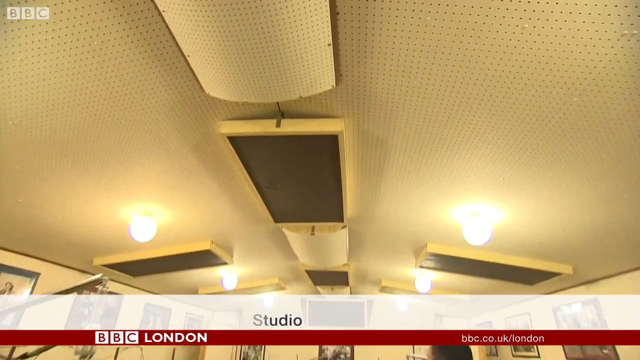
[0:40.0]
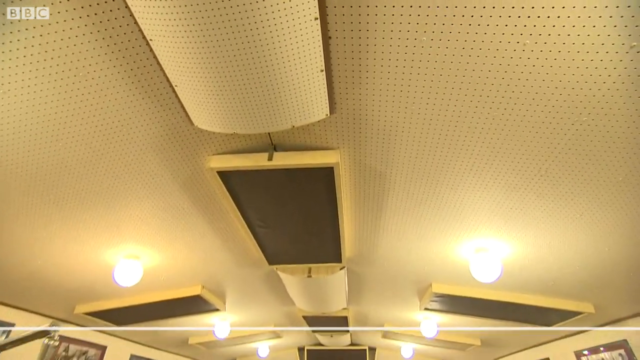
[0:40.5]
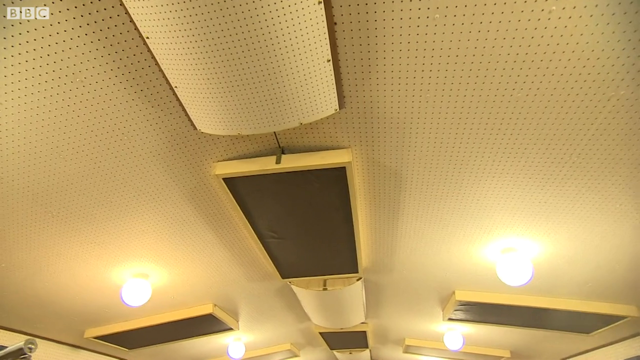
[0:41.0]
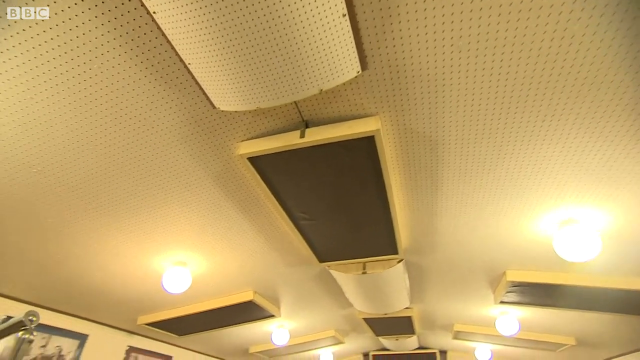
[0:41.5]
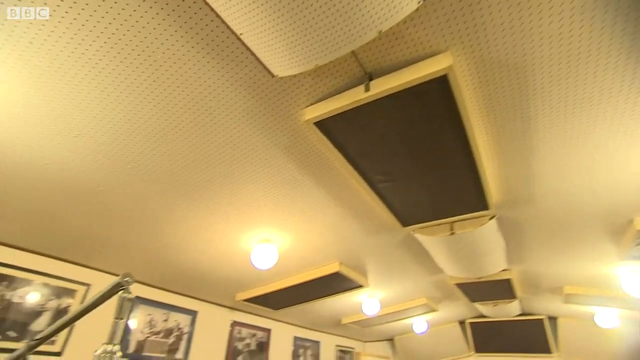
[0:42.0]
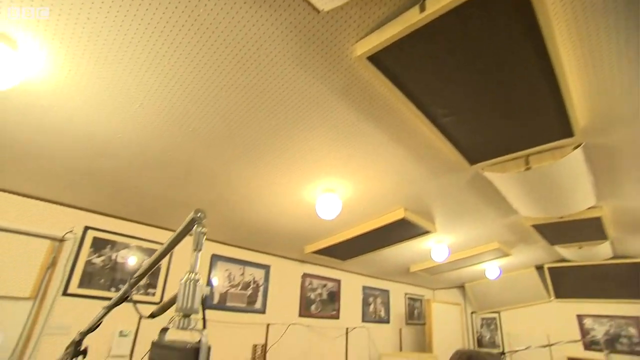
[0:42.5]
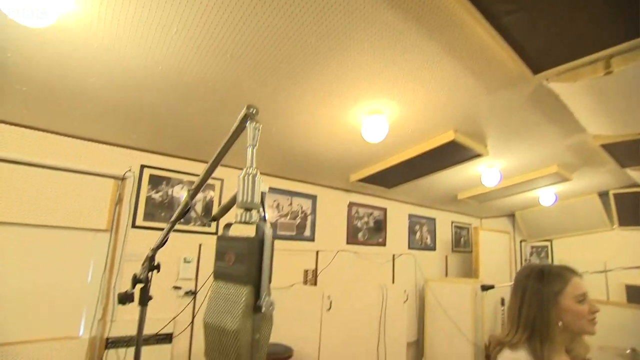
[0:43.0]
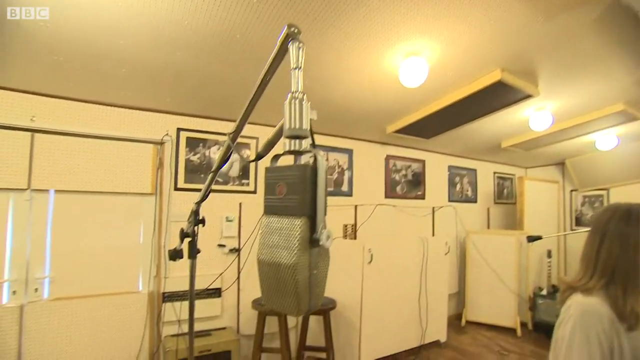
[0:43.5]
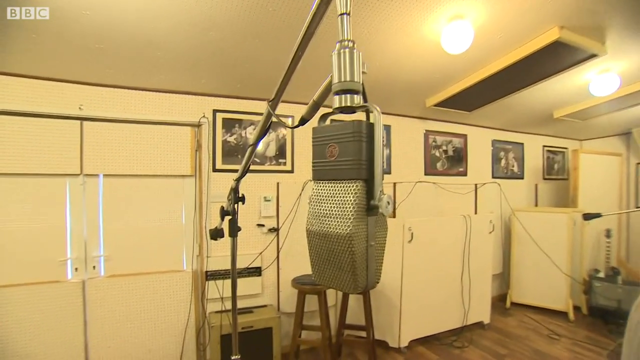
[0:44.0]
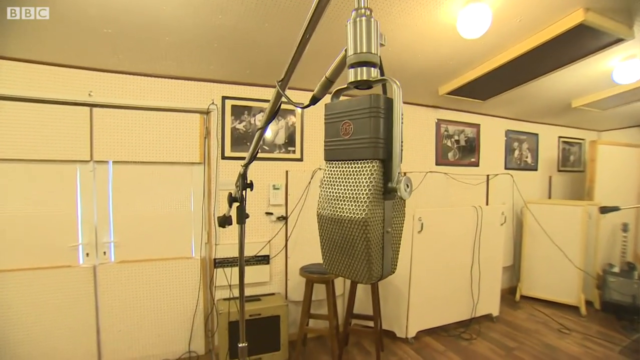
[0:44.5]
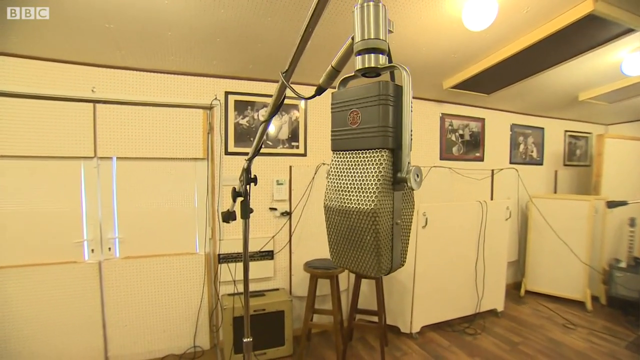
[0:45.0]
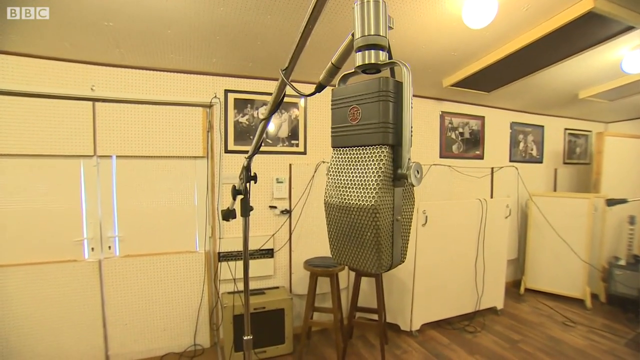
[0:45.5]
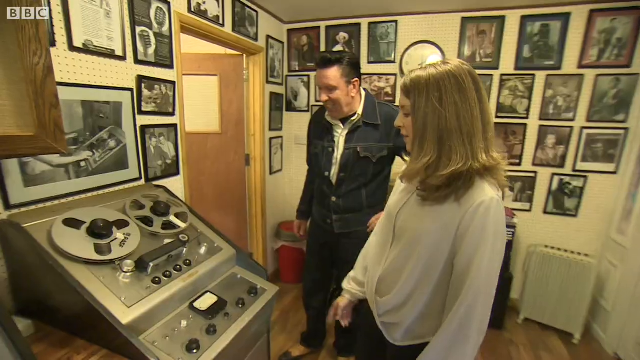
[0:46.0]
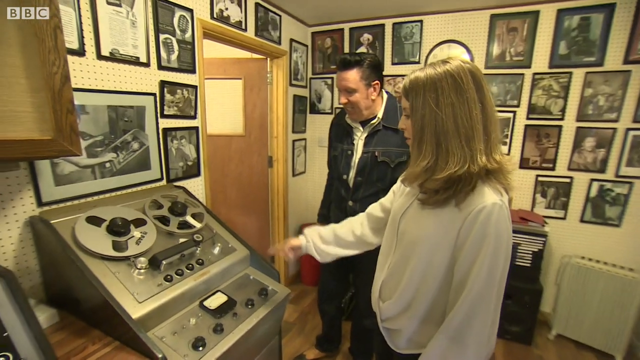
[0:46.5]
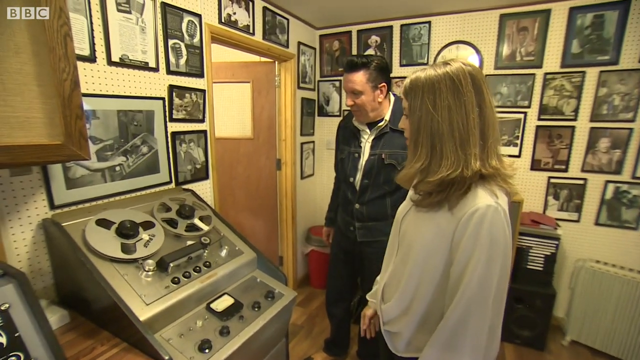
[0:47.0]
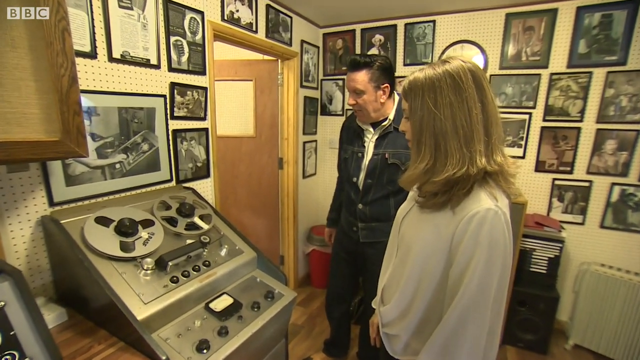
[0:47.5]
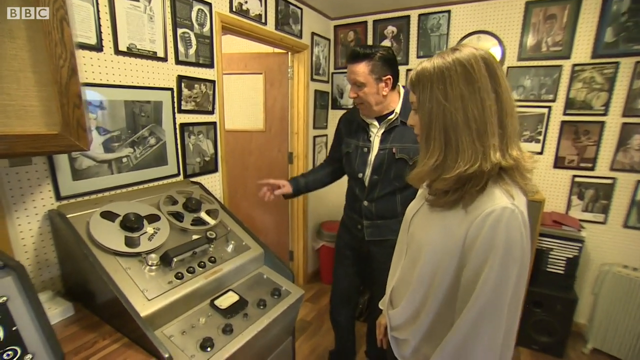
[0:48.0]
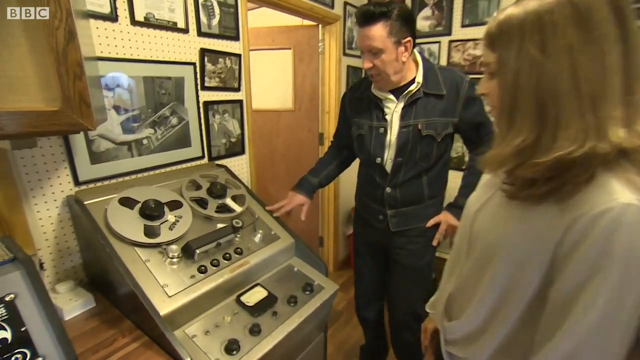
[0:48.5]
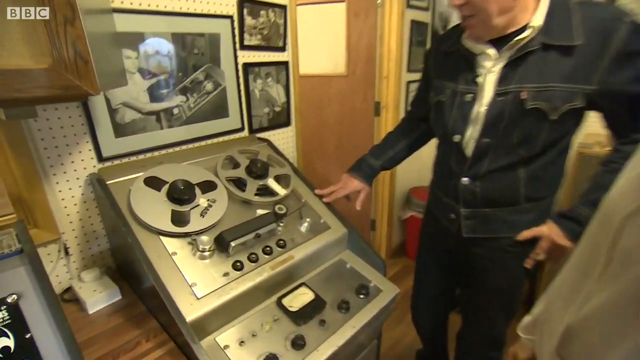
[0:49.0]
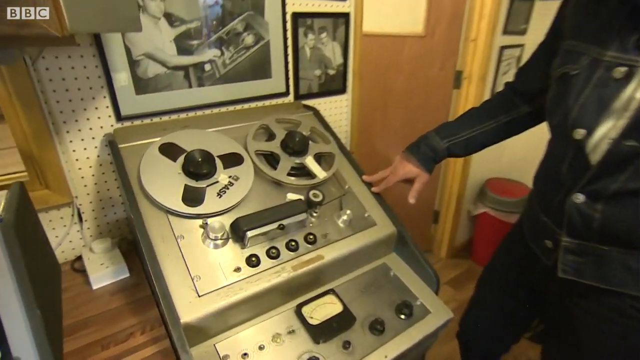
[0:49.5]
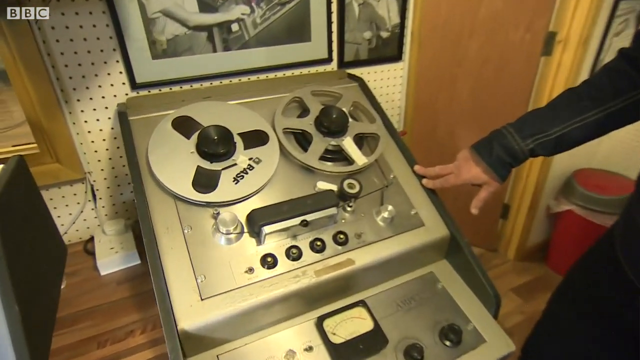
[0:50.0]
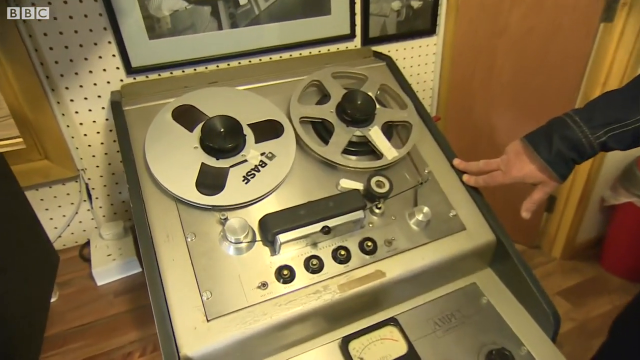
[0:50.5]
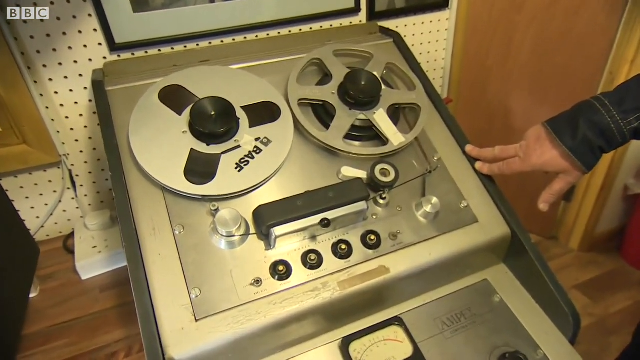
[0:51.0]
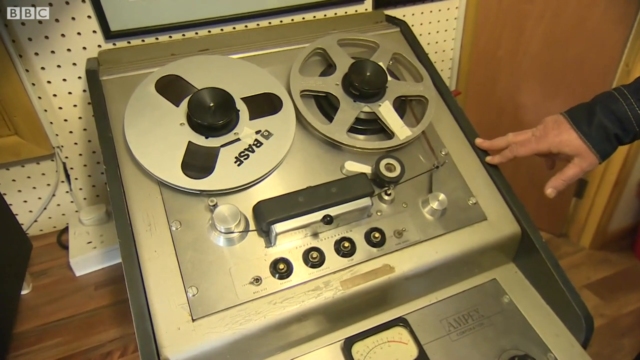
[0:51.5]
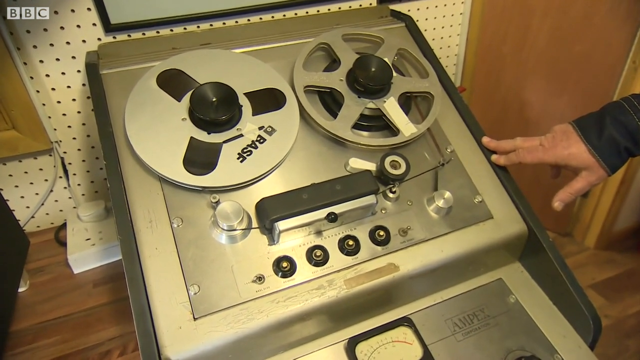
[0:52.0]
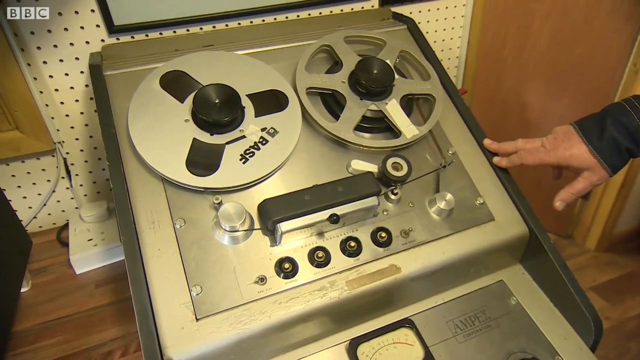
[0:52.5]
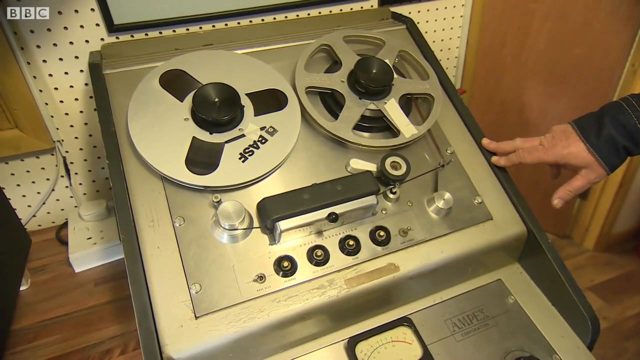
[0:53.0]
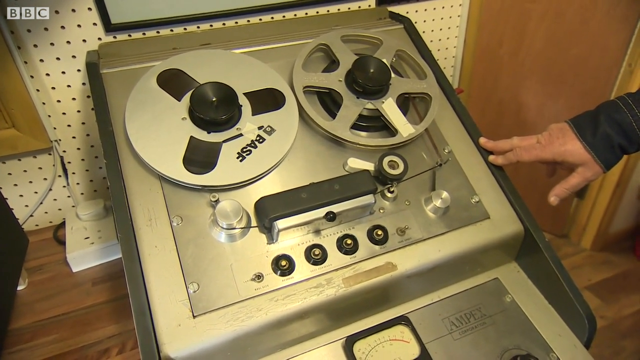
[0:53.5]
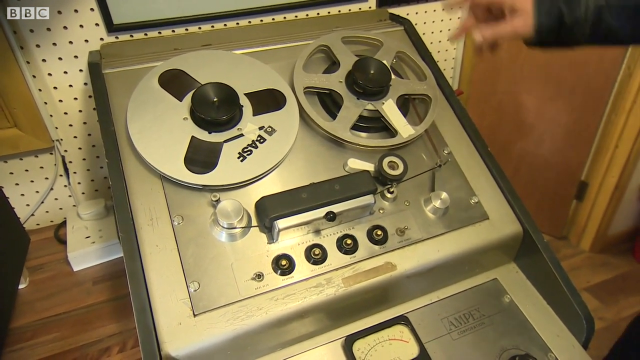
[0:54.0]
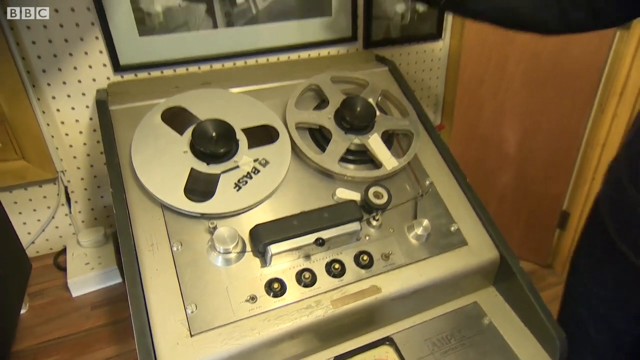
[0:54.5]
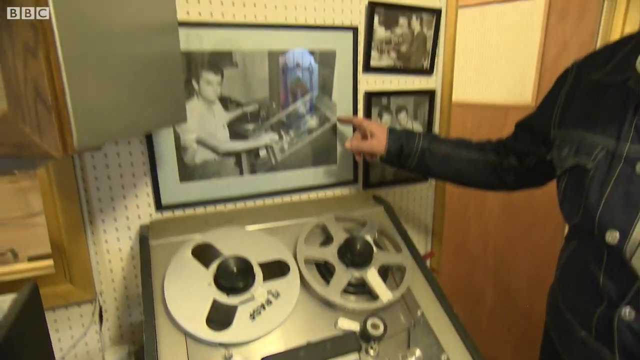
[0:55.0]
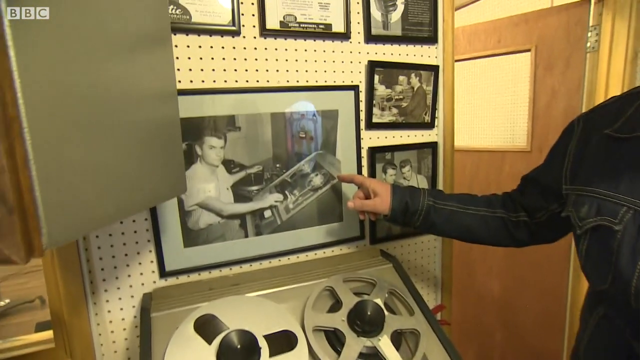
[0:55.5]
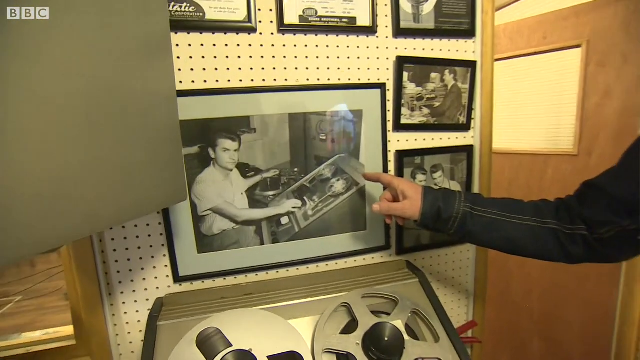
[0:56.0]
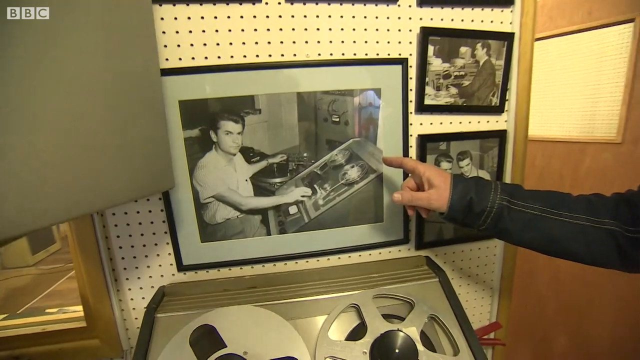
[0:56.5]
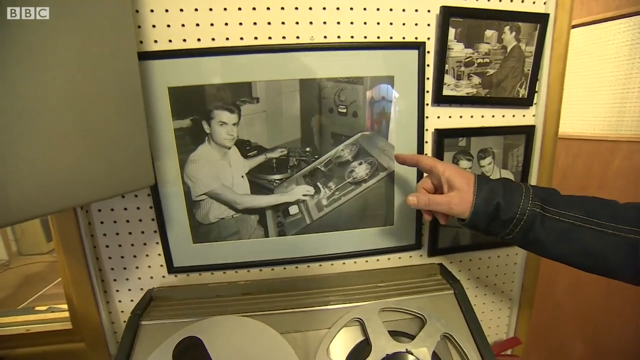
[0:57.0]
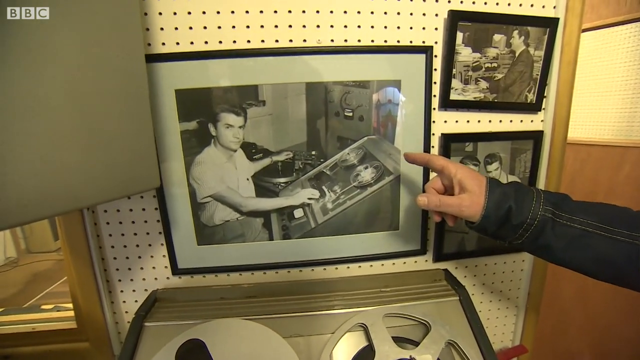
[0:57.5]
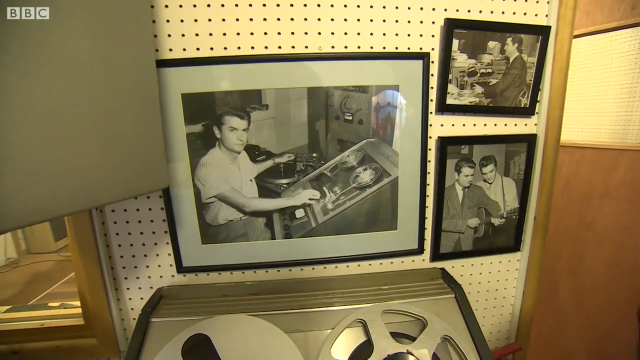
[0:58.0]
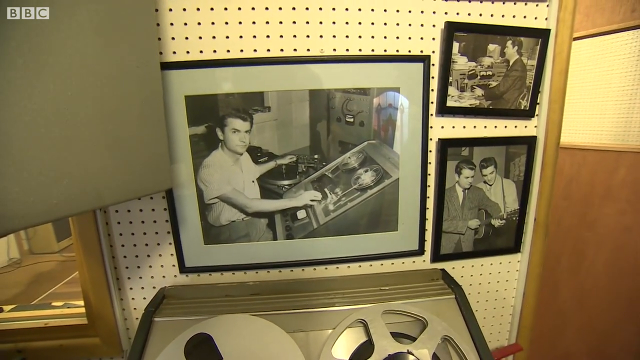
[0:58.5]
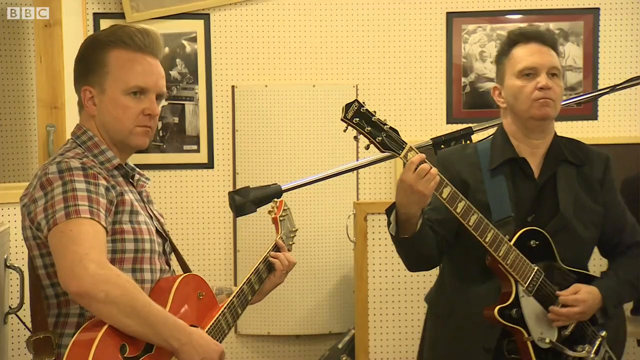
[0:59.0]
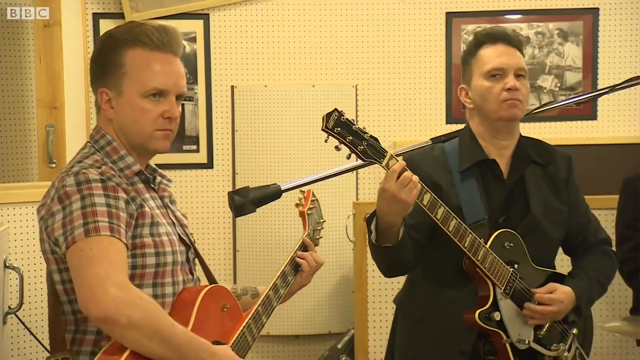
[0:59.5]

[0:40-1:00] Inside the music studio, the view is of the ceiling, with noise-dampening material installed on the ceiling and walls. A vintage reel-to-reel tape player is then shown. Eventually the studio itself appears, with musicians standing and playing their instruments. Two men play guitars: the man on the right is seen strumming the strings, and the man on the left looks over to the right as he plays.